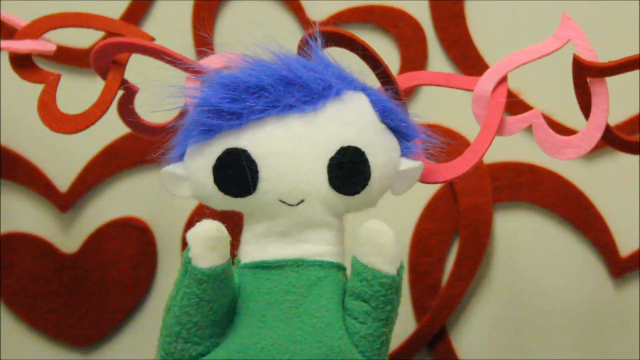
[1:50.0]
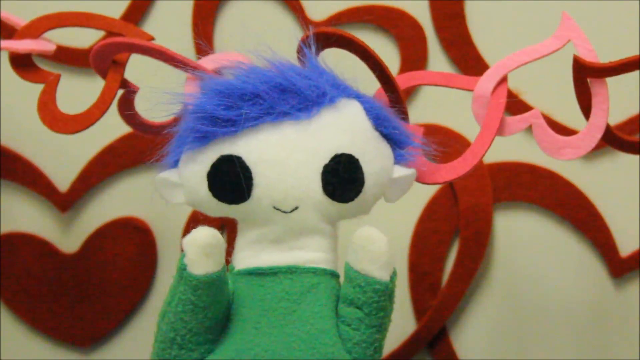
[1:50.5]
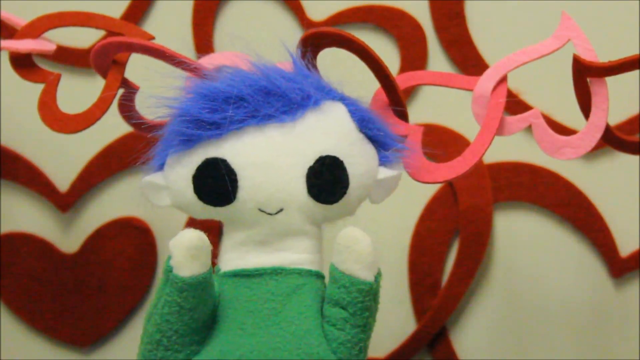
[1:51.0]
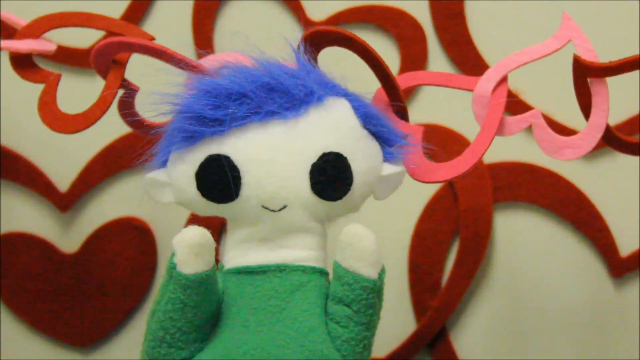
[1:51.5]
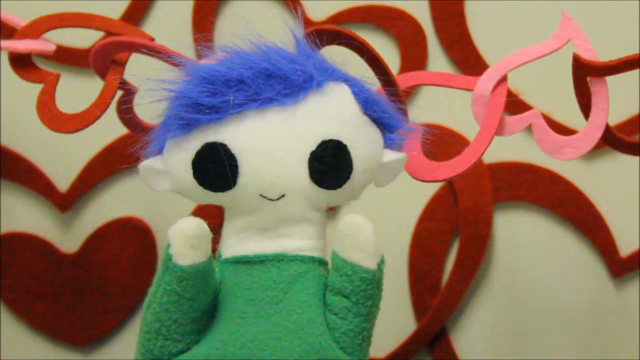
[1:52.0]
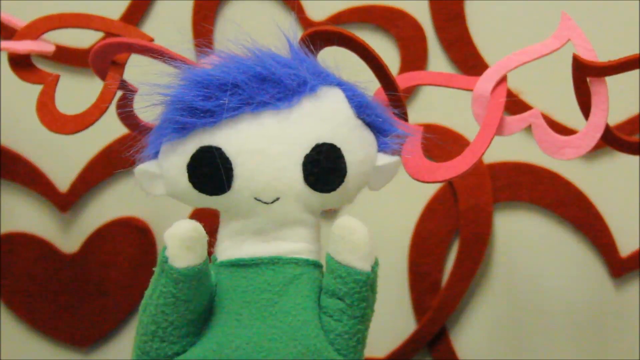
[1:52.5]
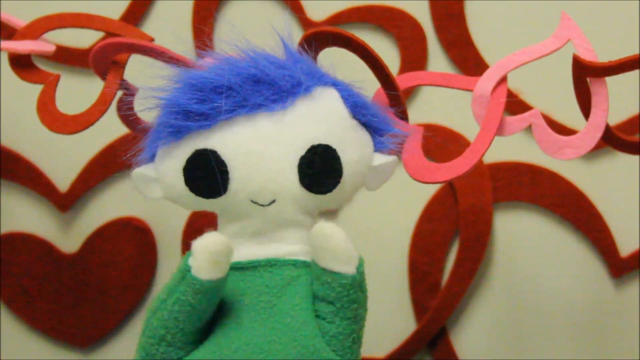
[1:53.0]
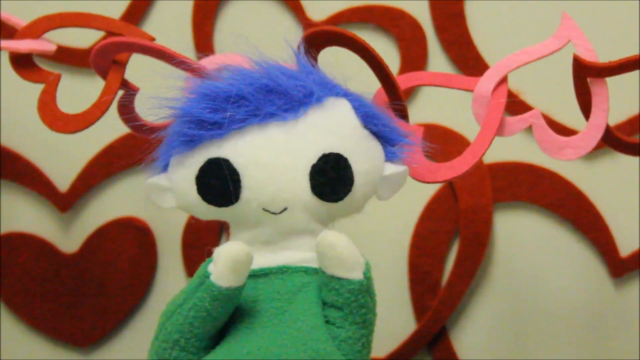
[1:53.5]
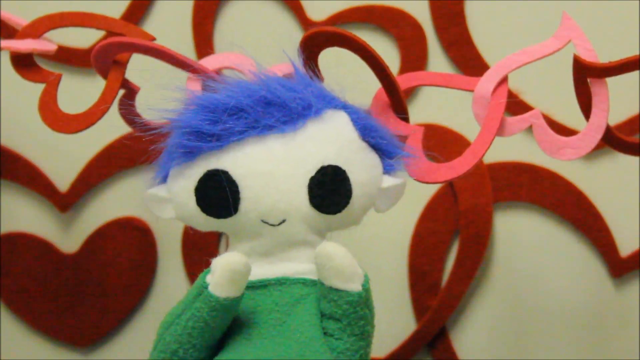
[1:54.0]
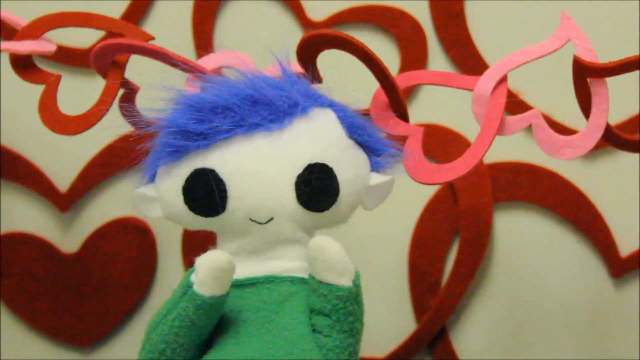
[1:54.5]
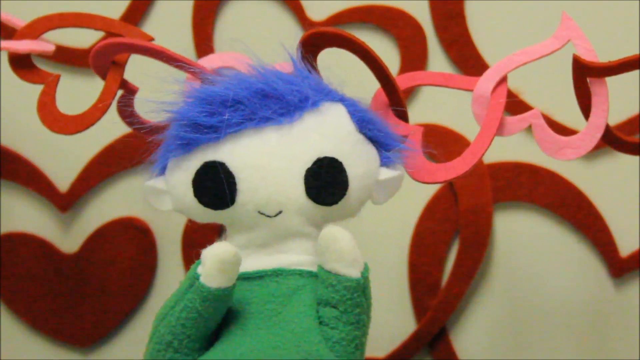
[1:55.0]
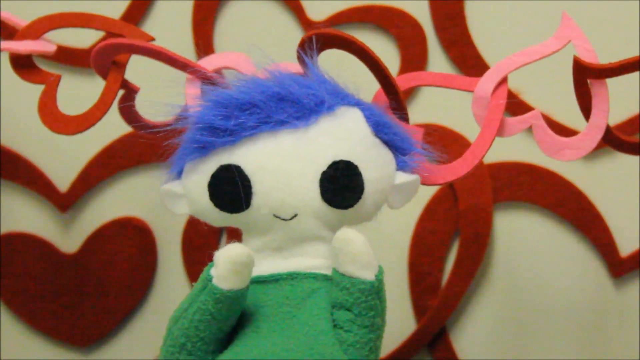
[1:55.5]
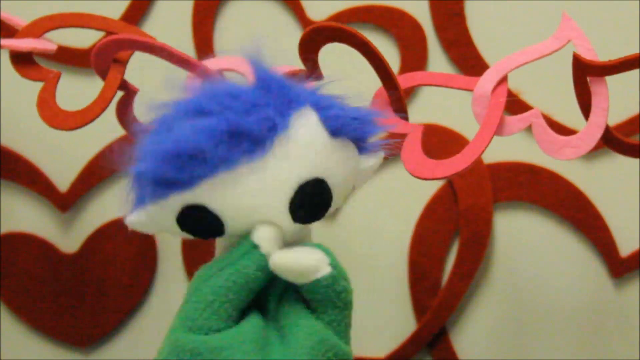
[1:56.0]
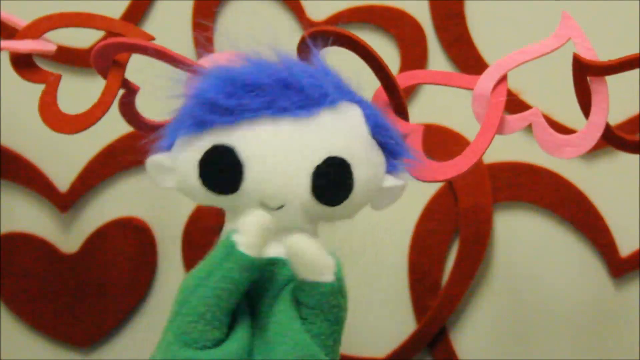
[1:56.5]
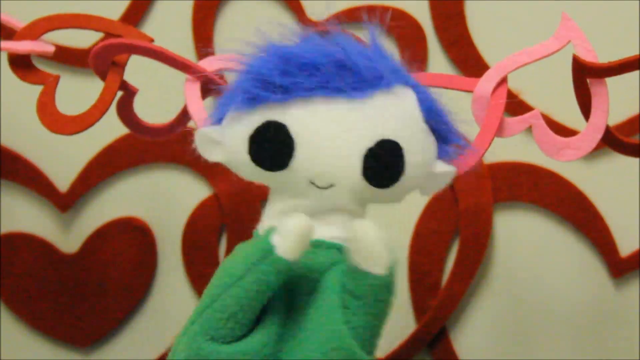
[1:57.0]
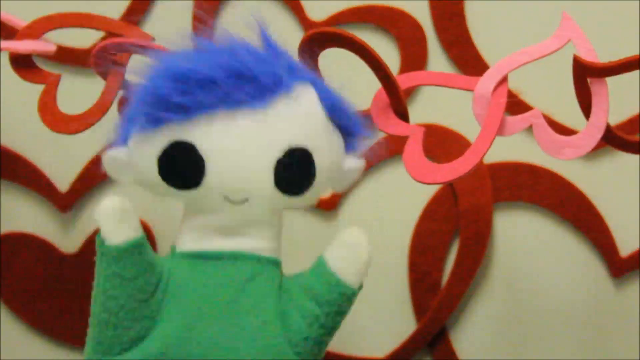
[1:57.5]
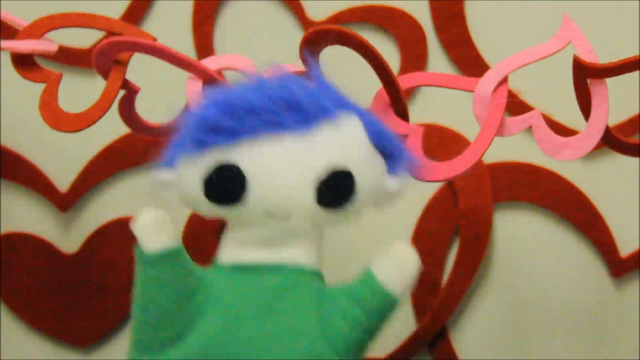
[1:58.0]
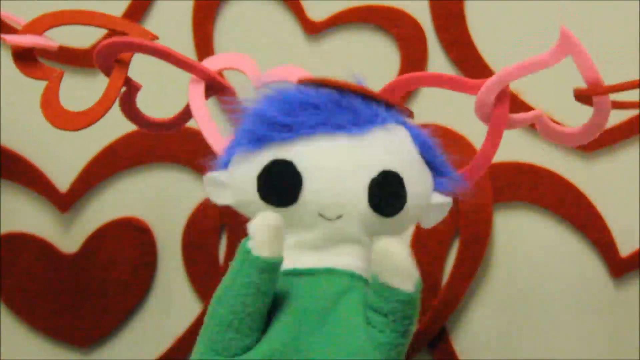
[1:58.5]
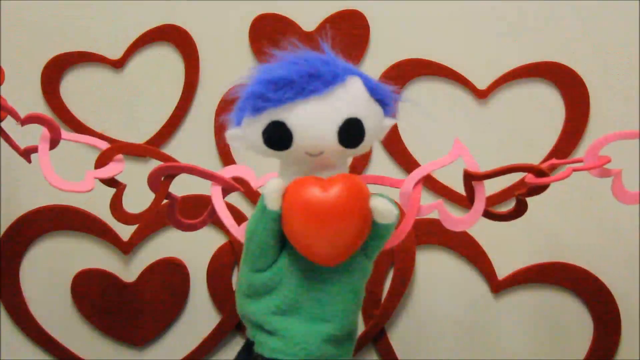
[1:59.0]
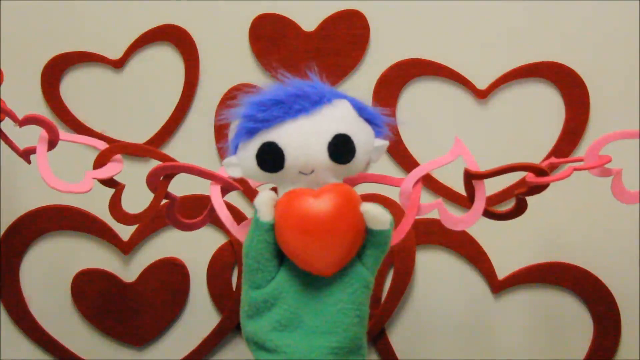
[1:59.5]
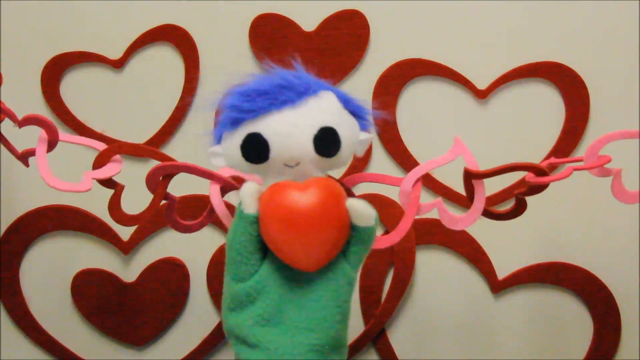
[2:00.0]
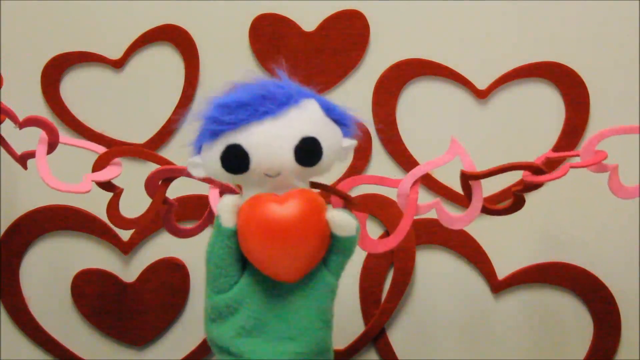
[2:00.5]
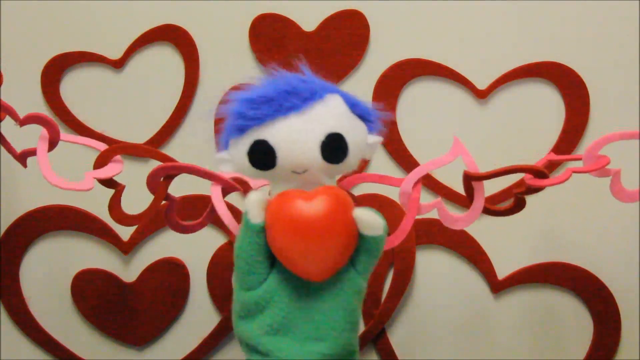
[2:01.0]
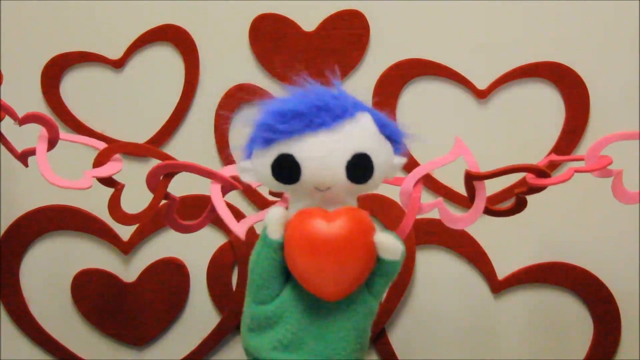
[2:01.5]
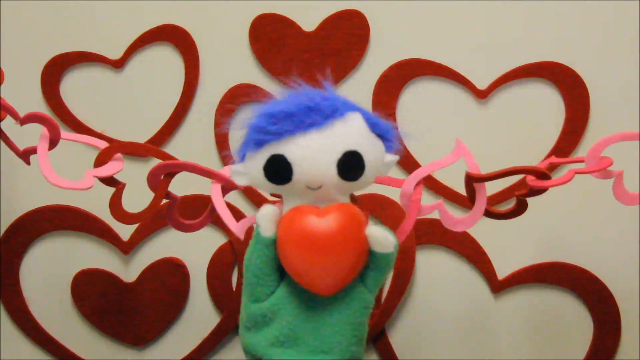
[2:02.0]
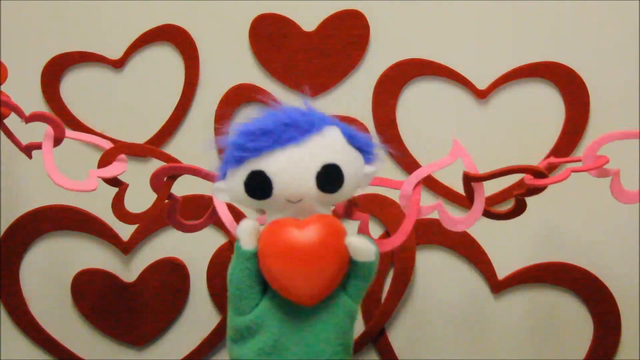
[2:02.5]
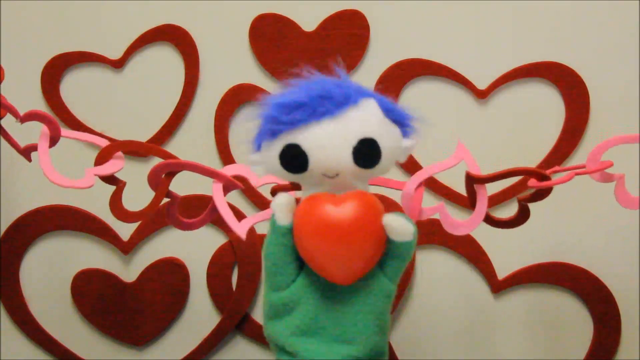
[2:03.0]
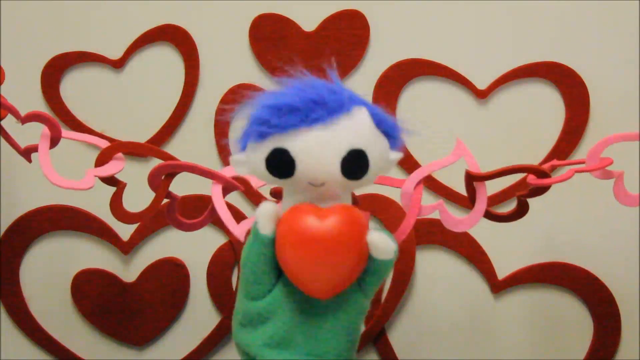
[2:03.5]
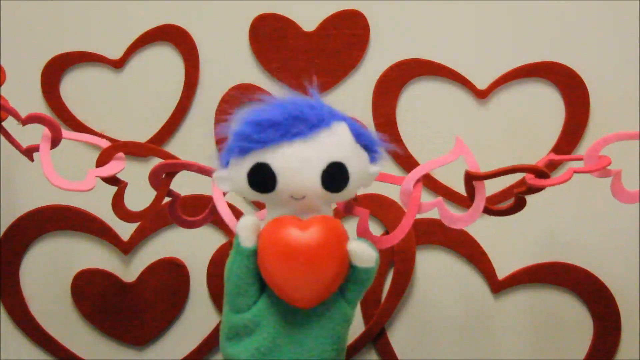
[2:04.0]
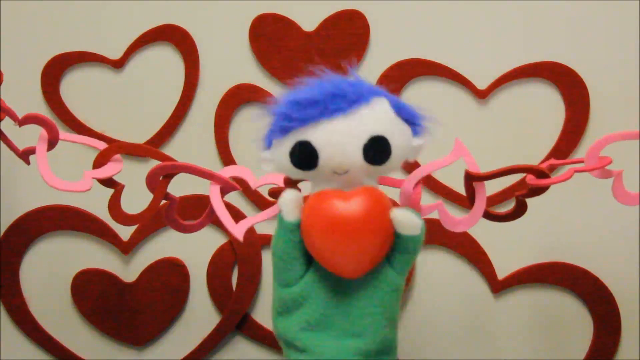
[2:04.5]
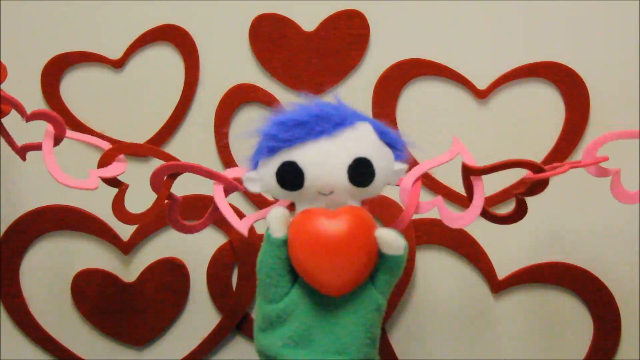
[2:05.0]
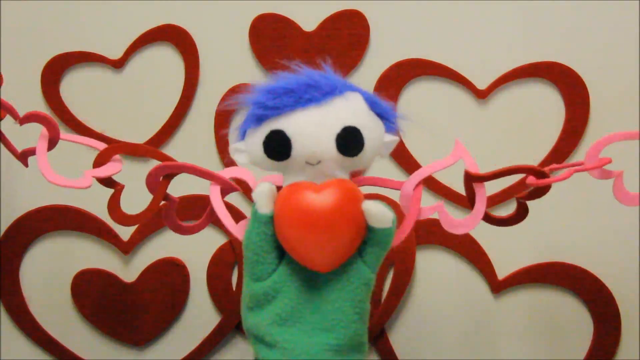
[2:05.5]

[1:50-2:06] The hand puppet holds both hands in the air. He has blue hair, is all white, has black eyes and a smile, and wears a green sweater. Behind him is a chain of hearts, and there are some hearts kind of sitting on something like a table; some are solid hearts and some are hollow hearts, but they are all heart outlines. The puppet is kind of clapping and moving around sporadically. He then holds up a solid red heart, something like a plastic heart, and is kind of shaking a little as he holds it, and the heart chain behind him shakes a little as he moves around. He keeps kind of moving and jumping around, not doing much else, holding the heart and shaking it, apparently as if his heart is pumping very fast.